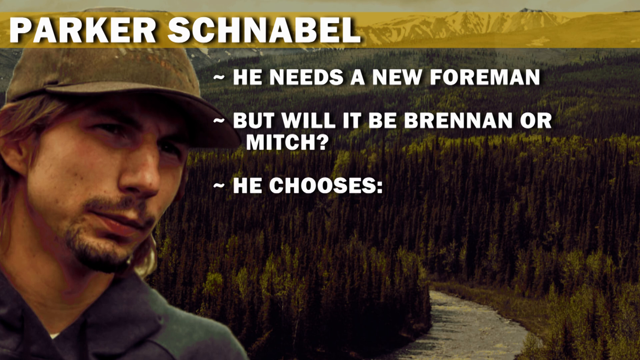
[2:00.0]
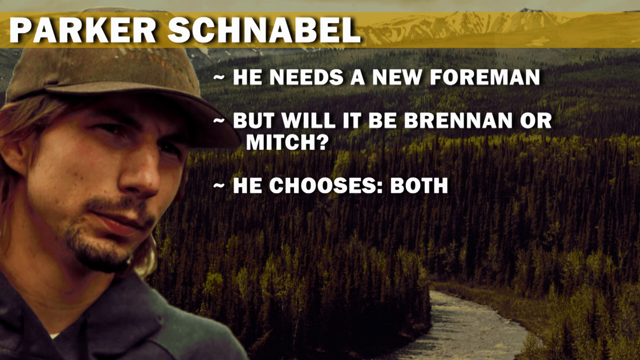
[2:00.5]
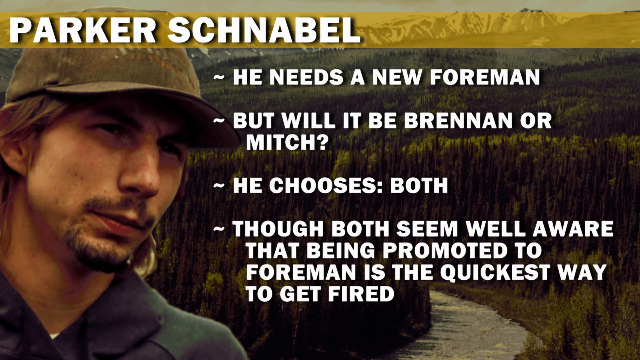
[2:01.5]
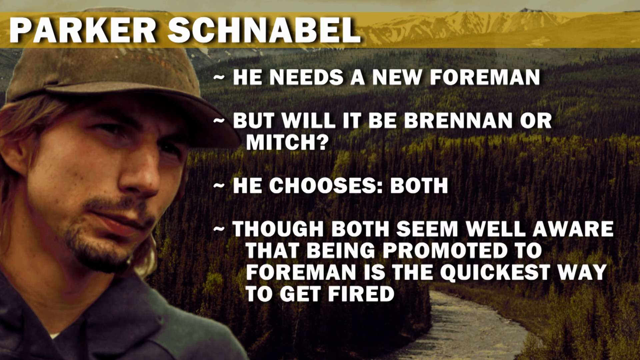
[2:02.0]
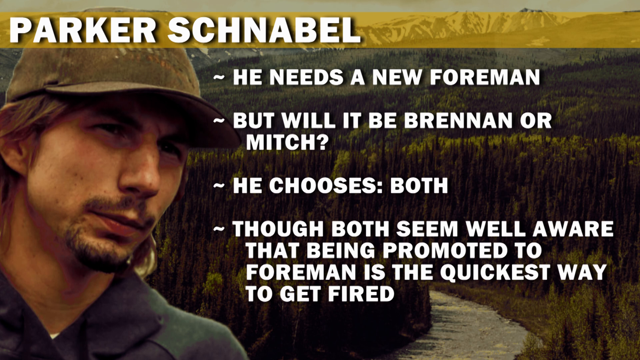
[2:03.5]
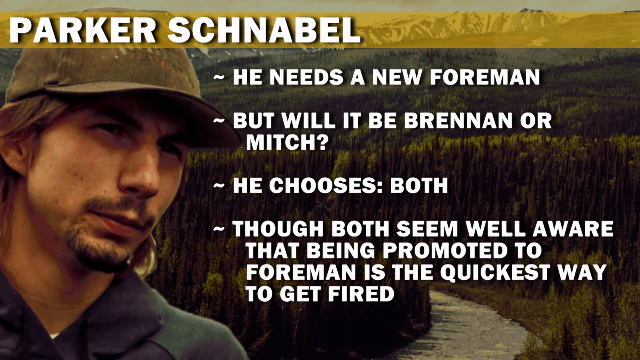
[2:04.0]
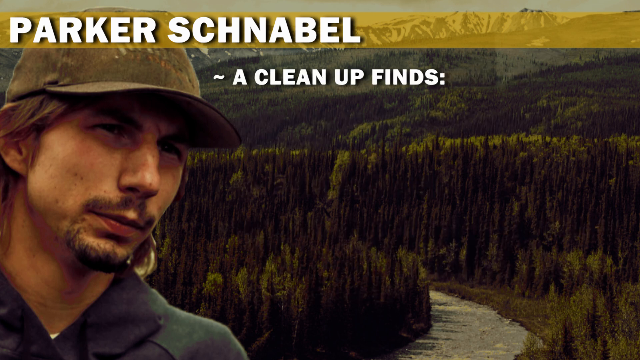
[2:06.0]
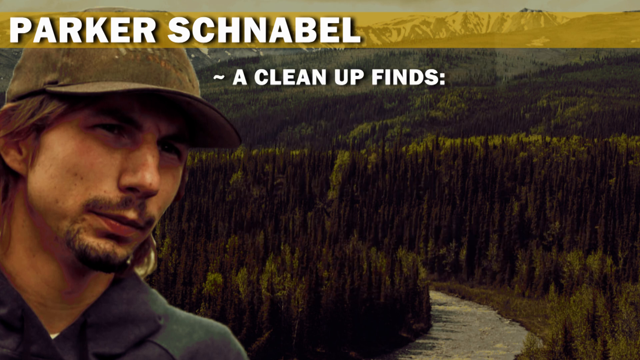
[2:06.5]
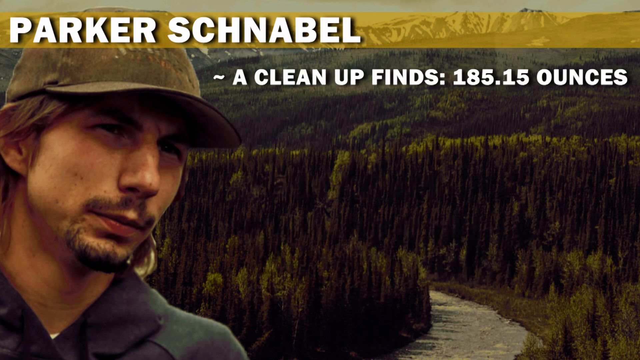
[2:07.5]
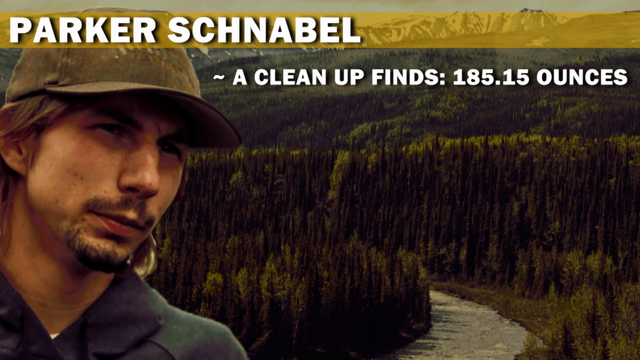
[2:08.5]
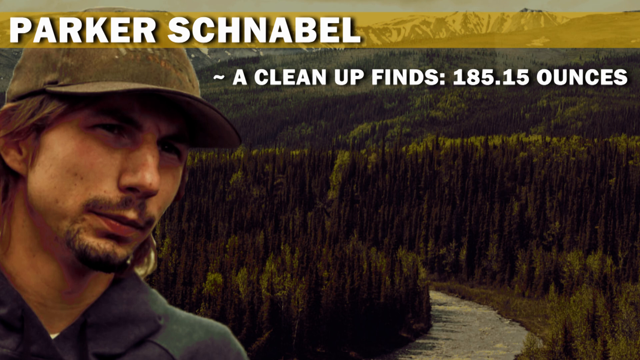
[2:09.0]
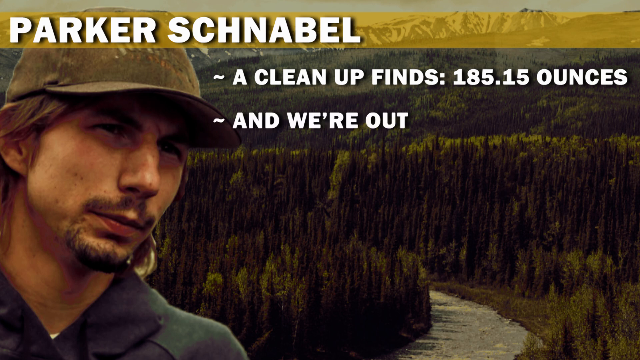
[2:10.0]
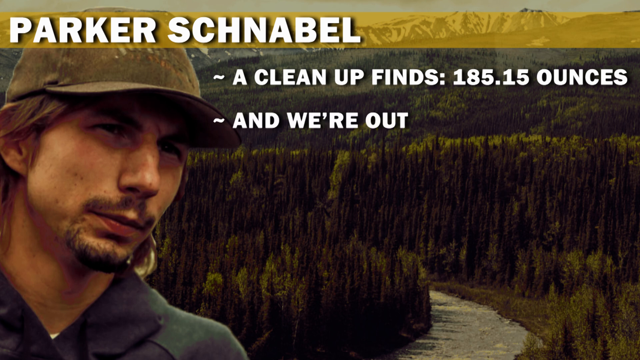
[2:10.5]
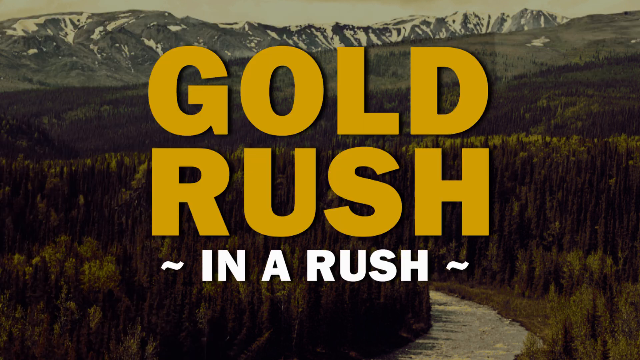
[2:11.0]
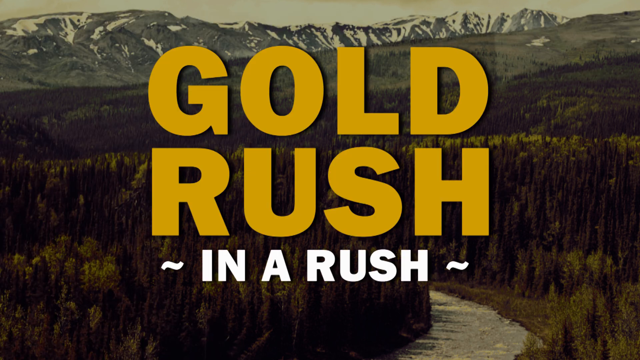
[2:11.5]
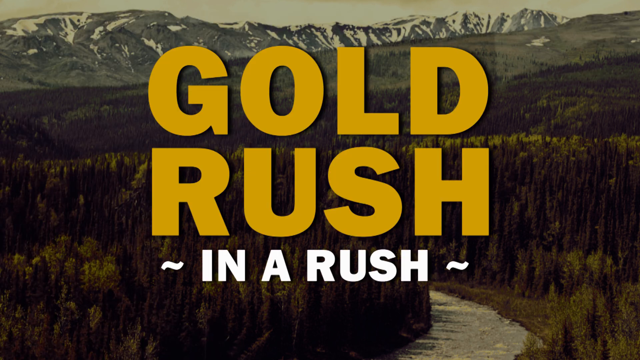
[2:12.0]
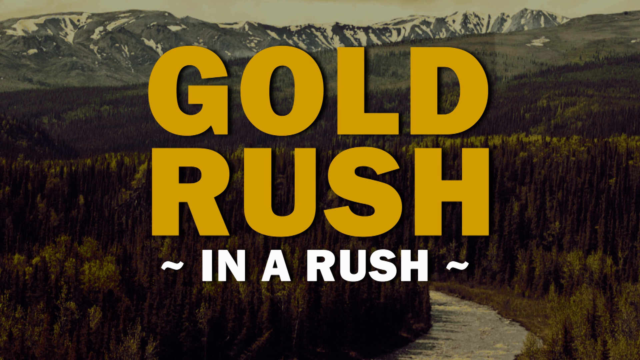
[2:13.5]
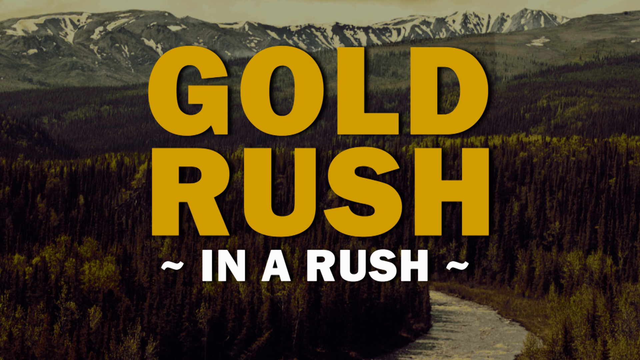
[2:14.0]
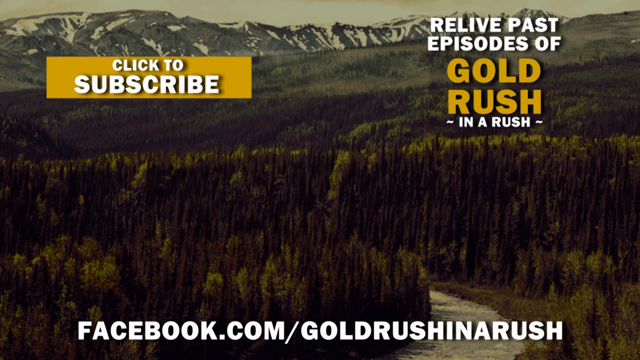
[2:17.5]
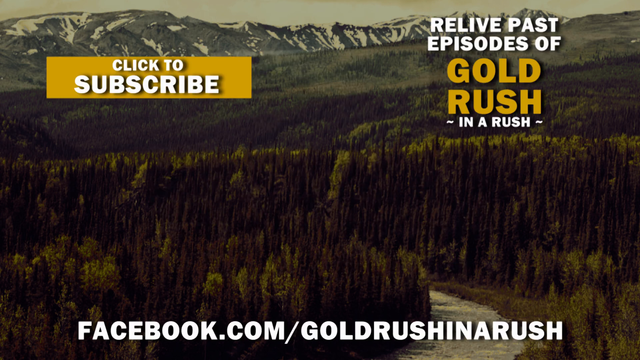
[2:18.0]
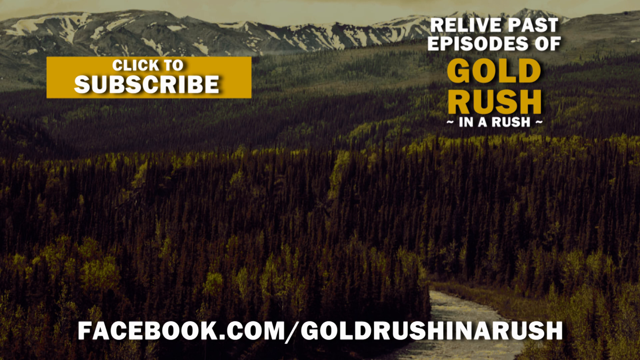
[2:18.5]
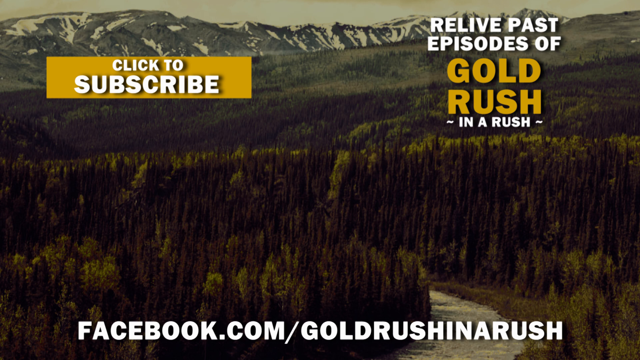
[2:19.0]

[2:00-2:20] The slide has a picture background of a forest with snowy mountains in the distance. At the top of the left-hand side, in white font, is the name "Parker Schnabel", with a head-and-shoulders image of Parker Schnabel just underneath. On the right-hand side are three bullet points: "he needs a new foreman.", "but will it be Brennan or Mitch?" and "he chooses", after which the word "both" appears. The next bullet point reads "though both seem well aware that being promoted to foreman is the quickest way to get fired." Those bullet points disappear and a new one reads "a clean up finds 185.15 ounces.", followed by "and we're out." The image of Parker disappears, leaving just the background image of the forest and the mountains. Across the entire centre of the screen, in gold capital letters, is the word "GOLD", with "RUSH" underneath and, below that, "IN A RUSH" in white capital letters. This stays on screen for a few moments before disappearing. New text then appears in the top right-hand corner reading "relive past episodes of Gold Rush in a RUSH". At the bottom of the screen, a Facebook address appears: "facebook.com/gold rush in a RUSH". In the top left-hand corner is an orange text box with white font reading "click to subscribe".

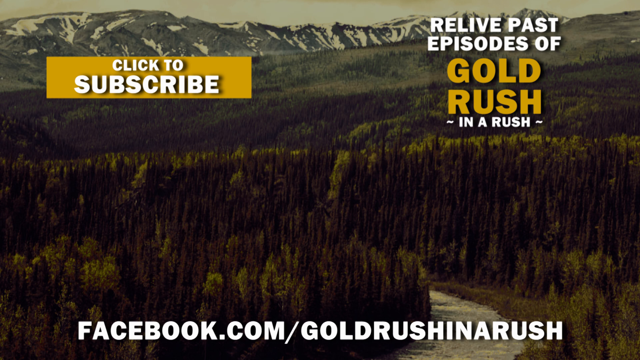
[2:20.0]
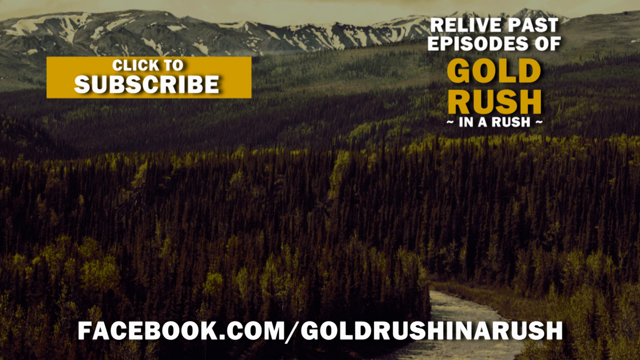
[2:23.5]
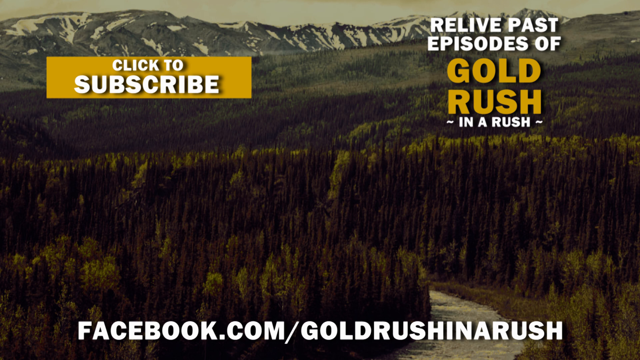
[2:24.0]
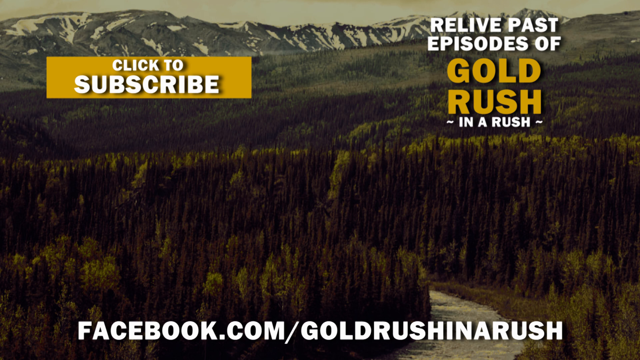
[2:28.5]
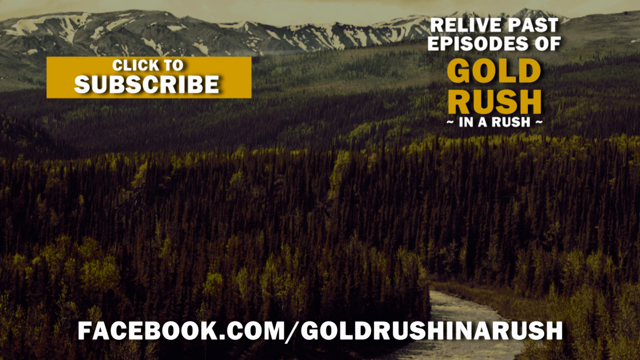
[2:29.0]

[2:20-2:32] In the top right-hand corner is text reading "relive past episodes of gold rush in a rush", at the bottom of the screen is a Facebook address, "facebook.com/gold rush in a rush", and in the top left-hand corner is an orange text box with white font reading "click to subscribe". The background image still shows the forest with the snowy mountains, and more of it is visible now because there is less text and fewer images over the top of it. There are no people in the scene, and a single path goes up, winding through the forest.